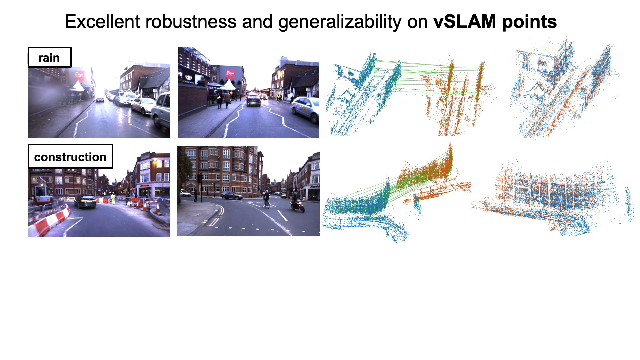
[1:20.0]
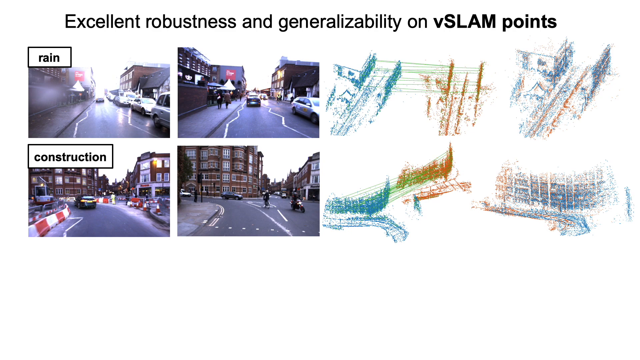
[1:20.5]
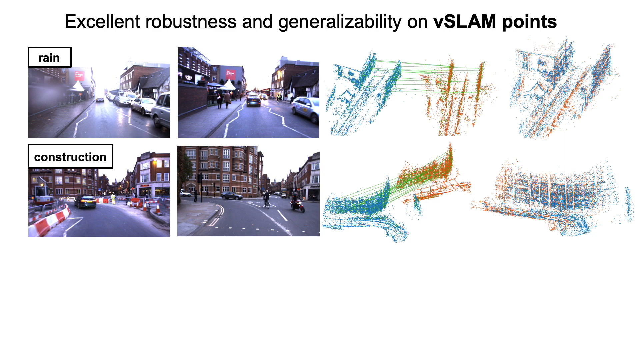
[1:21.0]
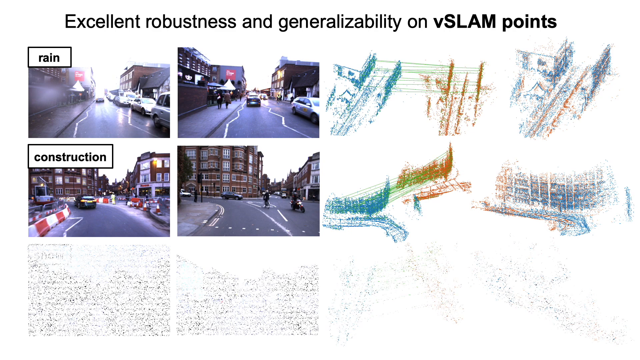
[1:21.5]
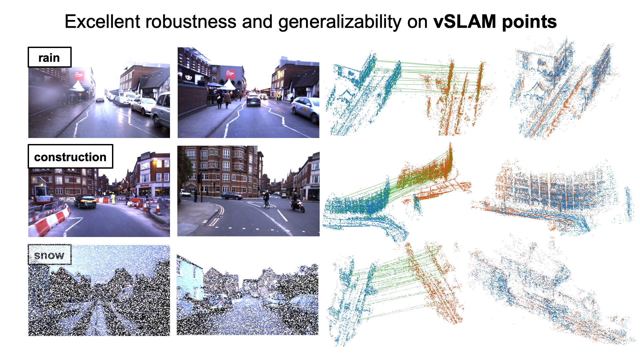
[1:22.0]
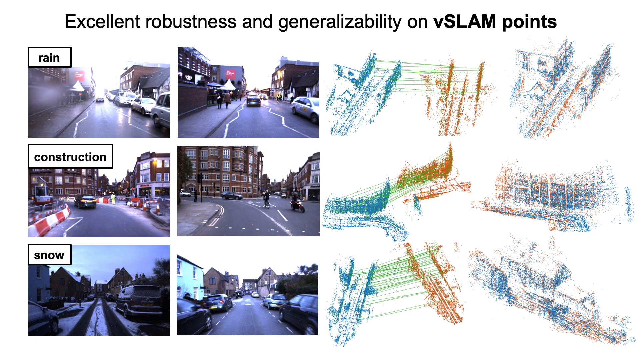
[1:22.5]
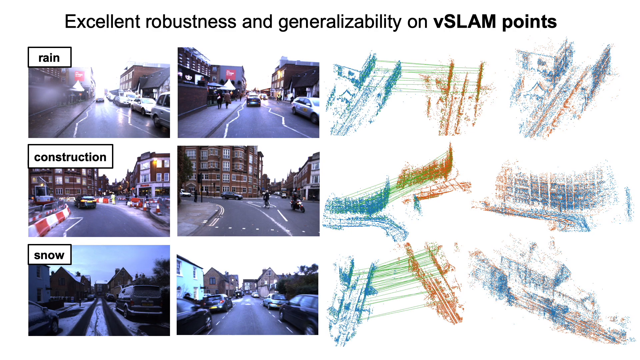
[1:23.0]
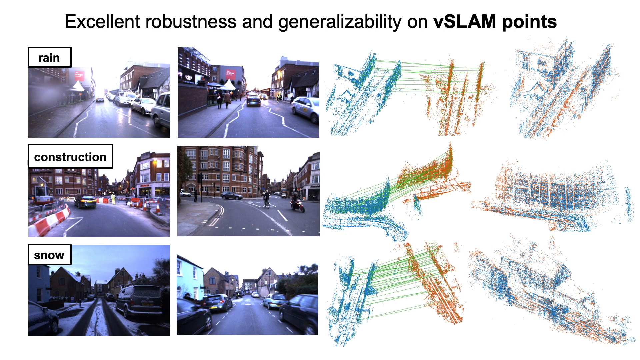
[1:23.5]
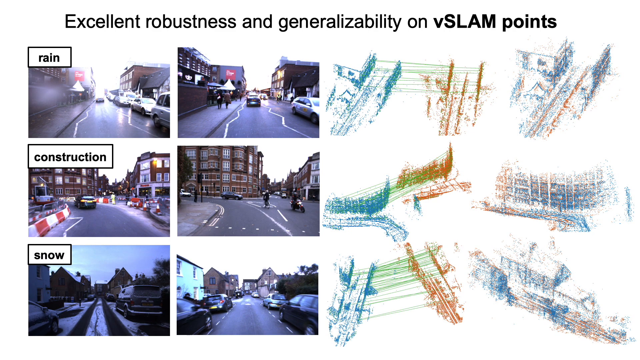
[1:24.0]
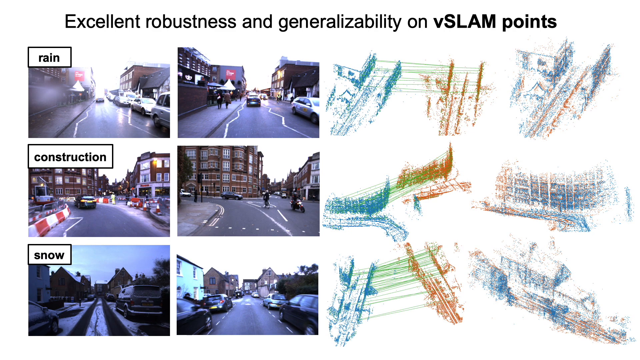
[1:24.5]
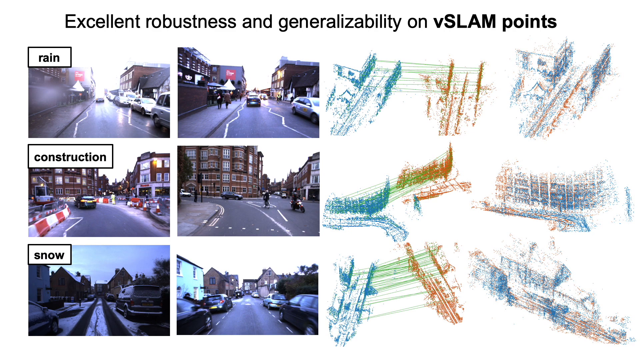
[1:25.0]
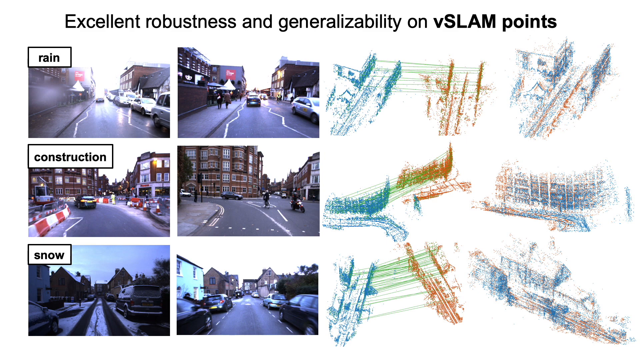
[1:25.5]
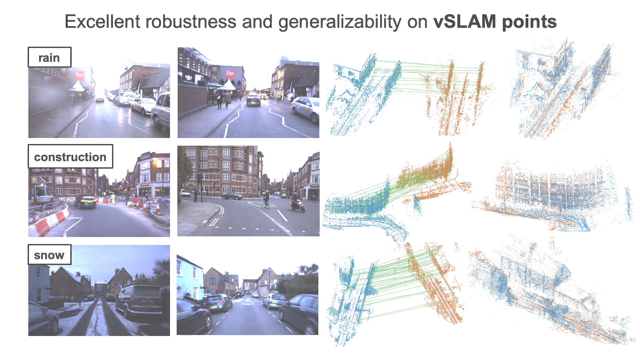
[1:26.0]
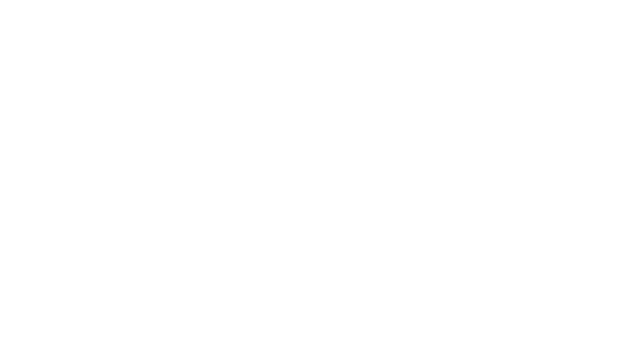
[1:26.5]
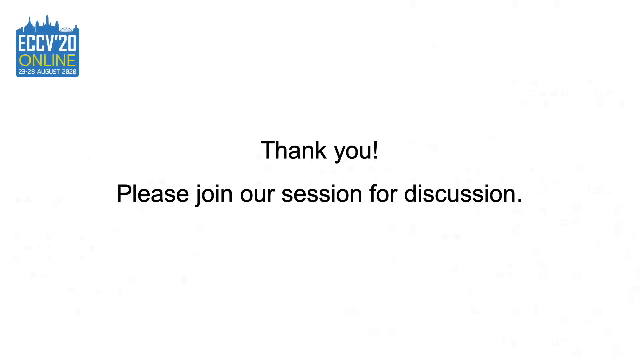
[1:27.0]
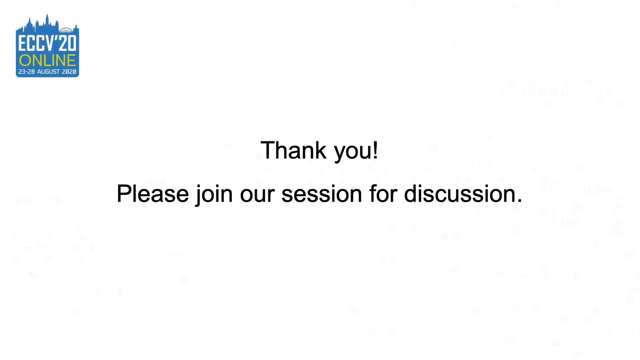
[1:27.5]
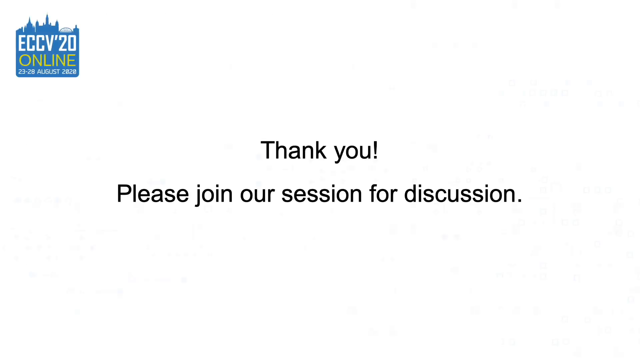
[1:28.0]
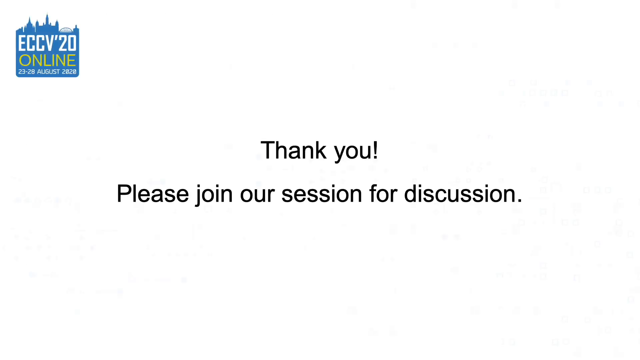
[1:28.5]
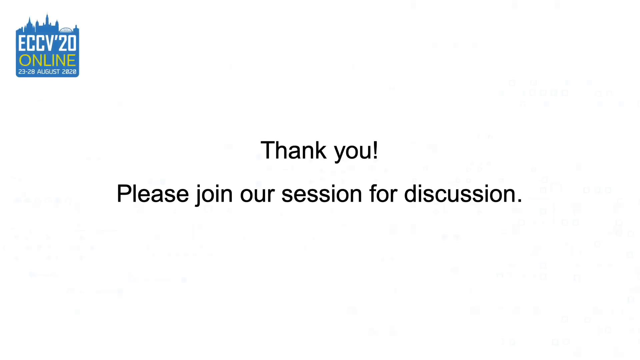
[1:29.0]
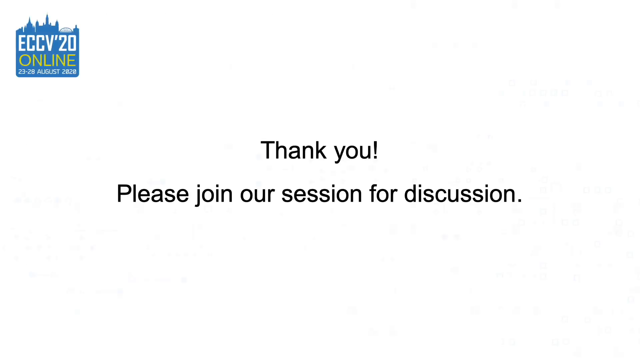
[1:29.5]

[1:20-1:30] The "excellent robustness and generalisability on V-slam points" page continues, with two photographs of the same shot, one showing rain and one without, then one showing construction and one without. Next, one photograph on the left shows a scene with snow and another shows the same scene without. On the right-hand side of the screen, images produced by the process show the results. A title page then reads "thank you, please join our session for discussion," with "EC CB '20 on line 23rd to the 28th of August 2020."